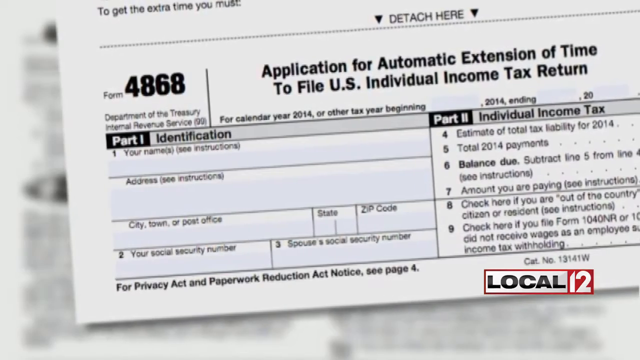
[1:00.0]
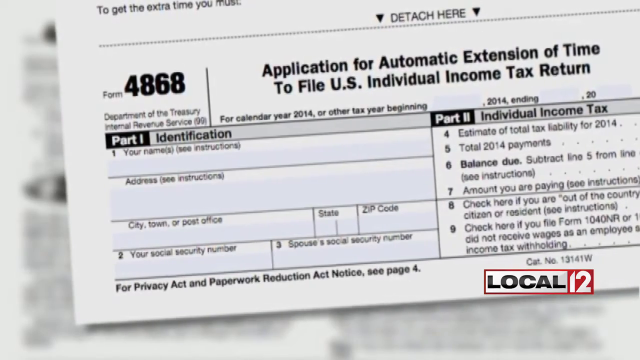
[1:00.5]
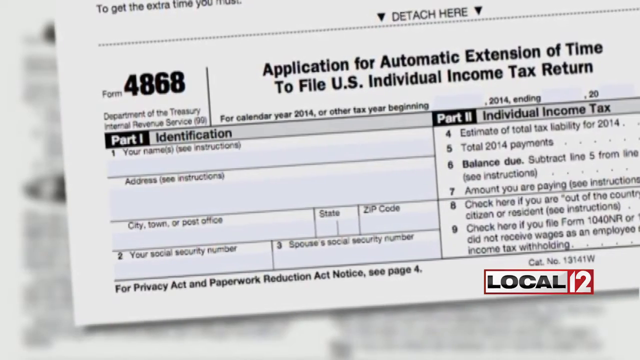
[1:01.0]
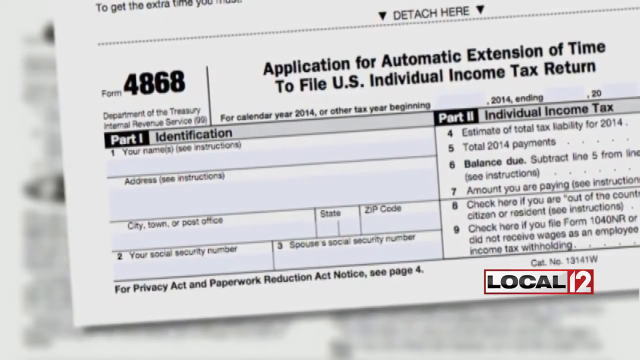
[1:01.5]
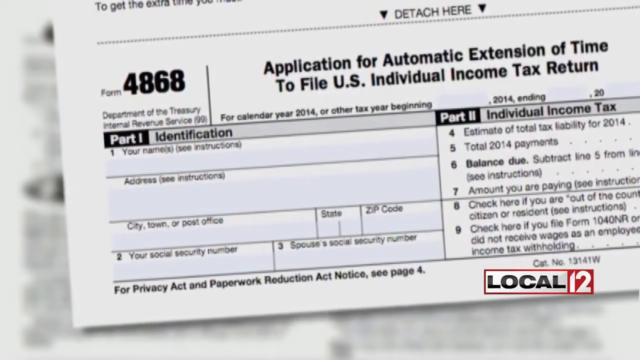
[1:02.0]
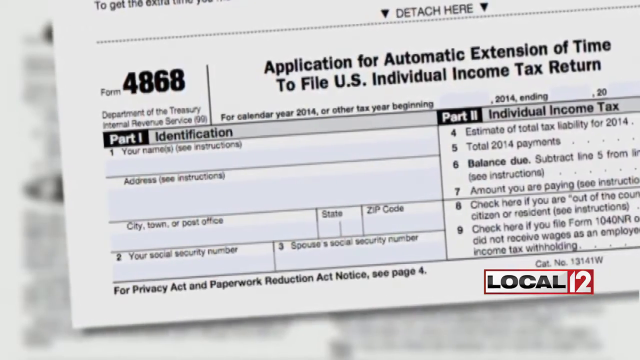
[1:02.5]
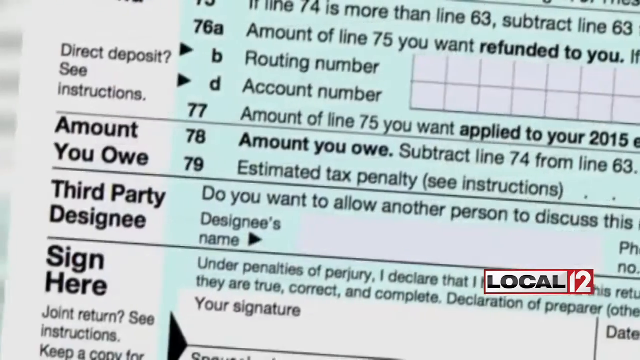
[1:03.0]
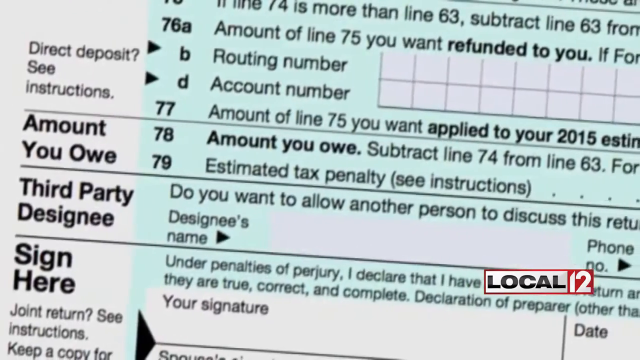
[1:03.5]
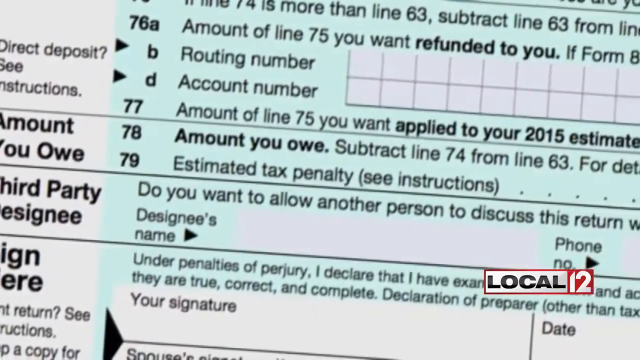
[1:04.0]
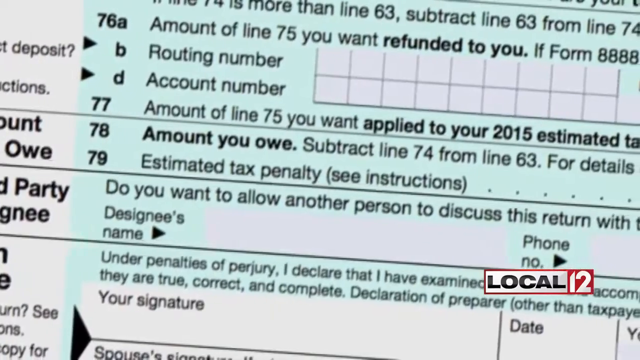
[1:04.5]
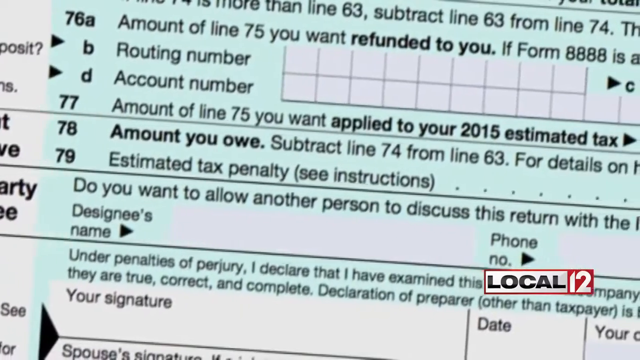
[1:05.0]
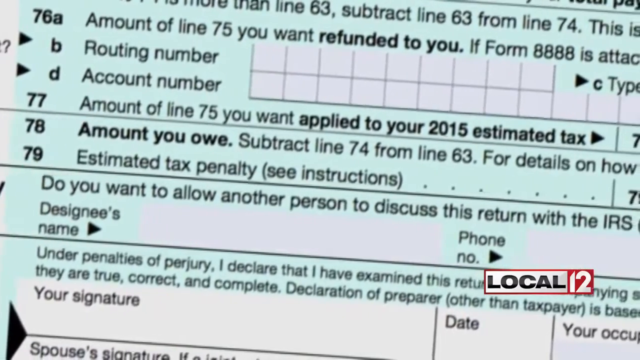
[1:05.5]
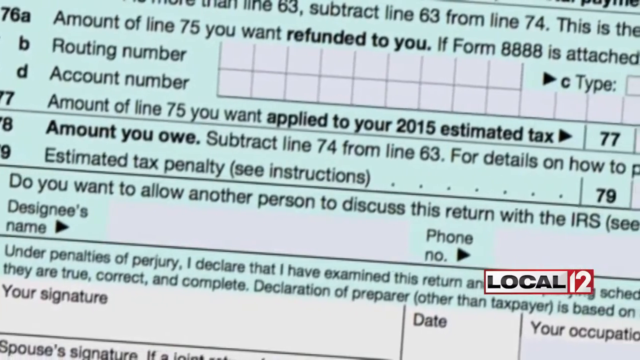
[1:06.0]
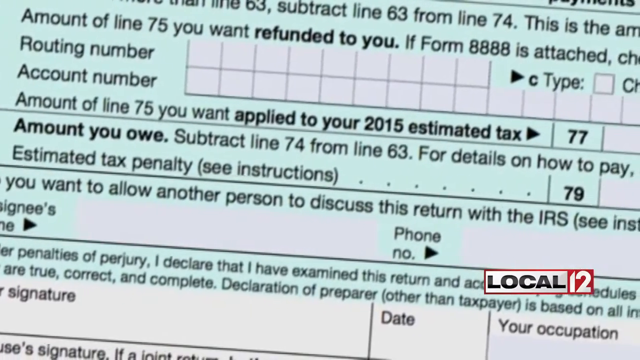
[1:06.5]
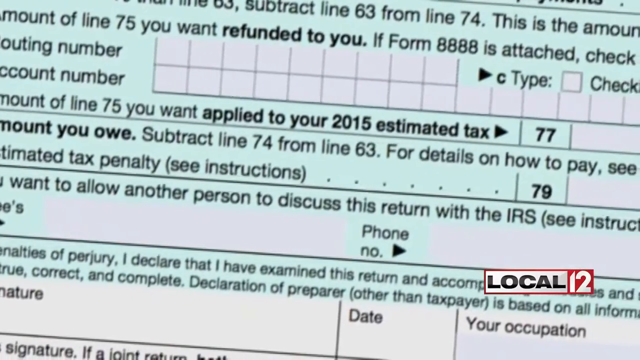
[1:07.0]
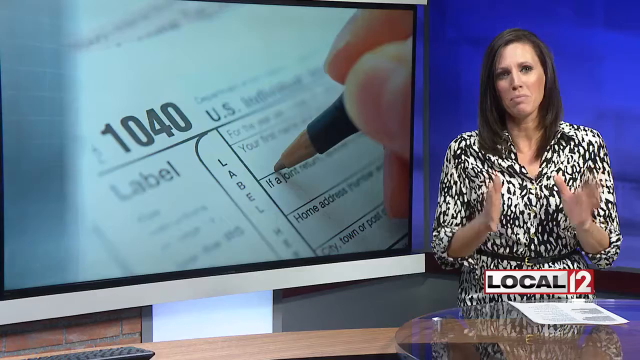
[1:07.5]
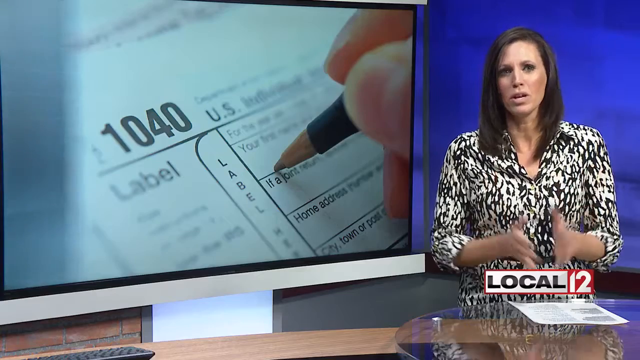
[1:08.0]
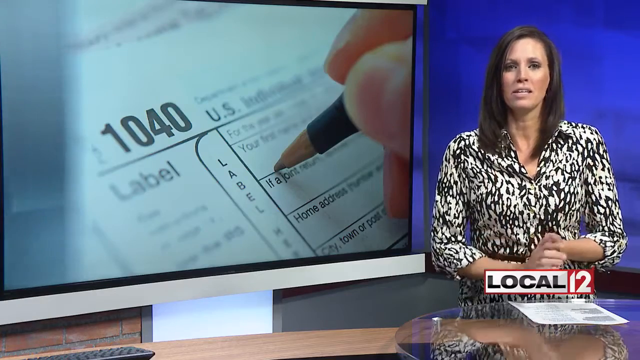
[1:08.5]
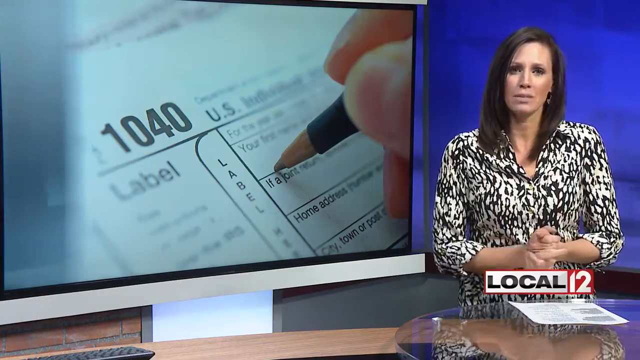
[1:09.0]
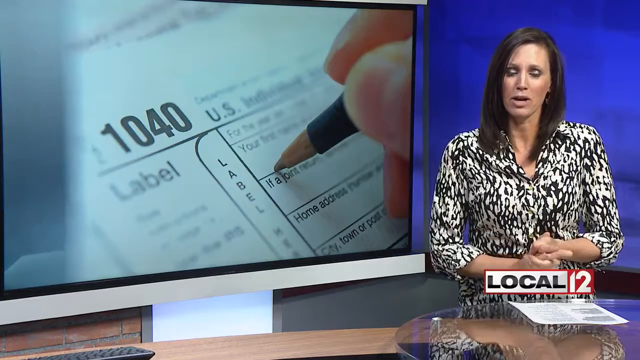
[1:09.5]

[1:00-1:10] The news broadcast on the channel "Local 12" shows tax forms, with the logo in the lower right corner. In the main part of the frame, tax form 4868 is in front, slightly tilted. On the left is part 1, identification, numbers 1 through 3, and part 2 is individual income tax, numbers 4 through 9. The form is blank. The video then shows the bottom part of a tax form, from number 76A down to 79, along with the signature area at the bottom. The reporter then comes back on, on the right; she has black hair, wears a black and white dress, and stands at a round table. On the left, a video screen shows the 1040 tax form.